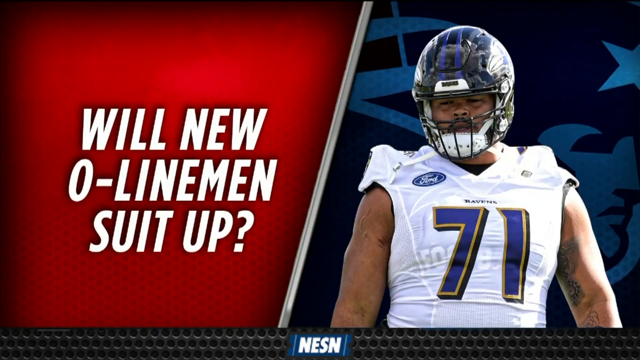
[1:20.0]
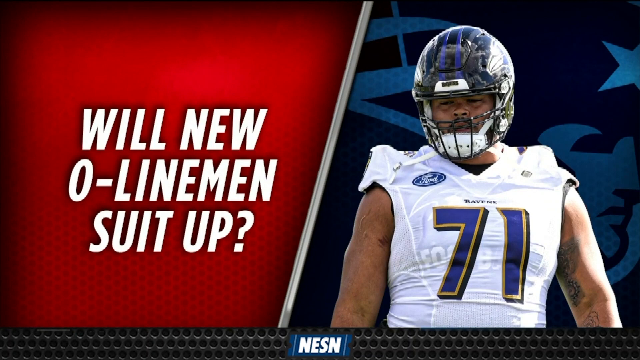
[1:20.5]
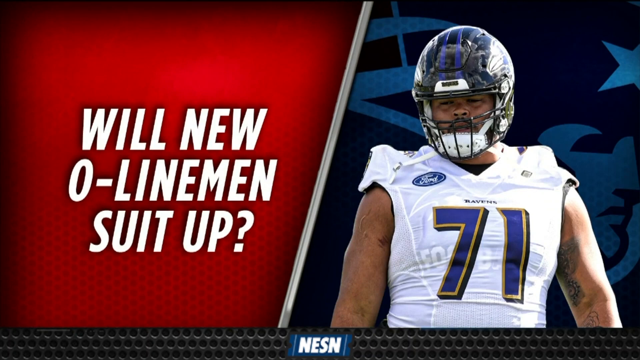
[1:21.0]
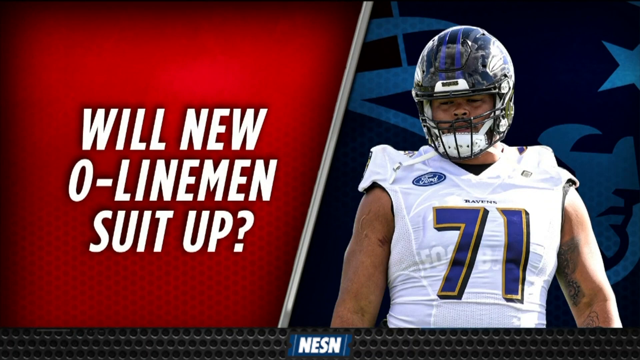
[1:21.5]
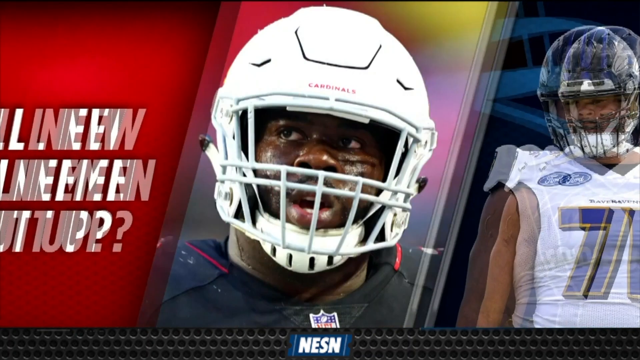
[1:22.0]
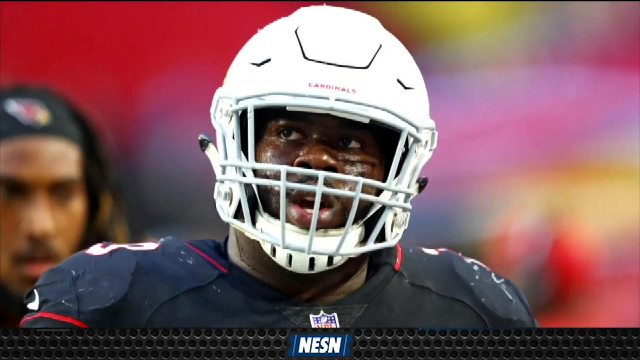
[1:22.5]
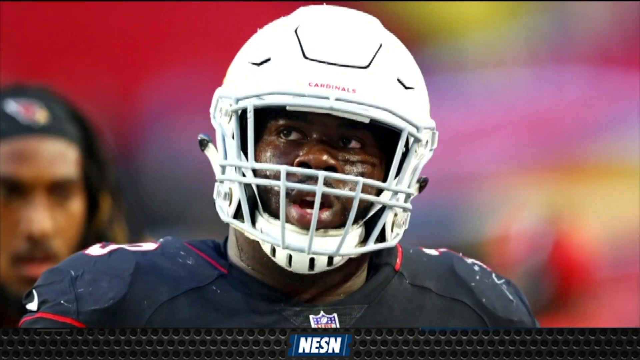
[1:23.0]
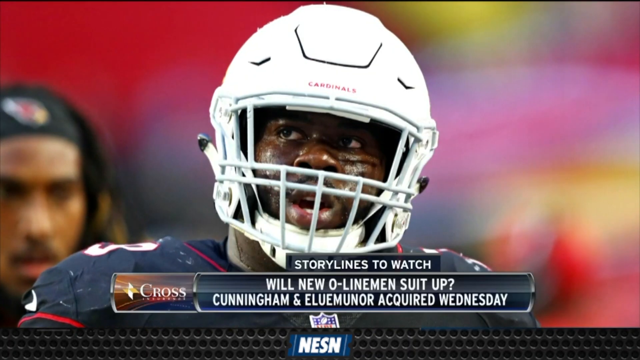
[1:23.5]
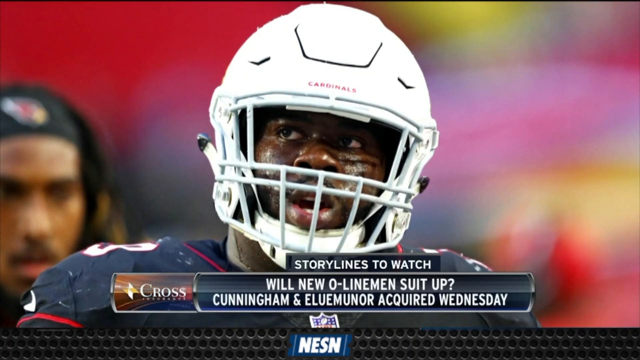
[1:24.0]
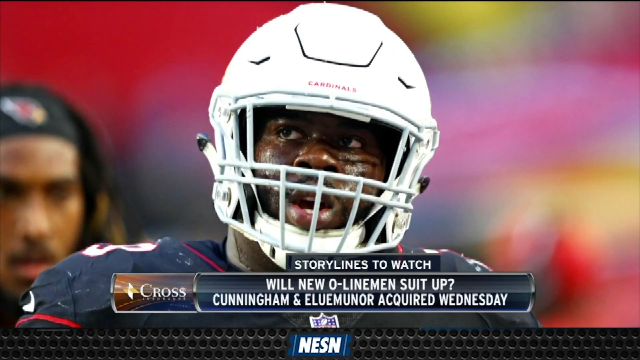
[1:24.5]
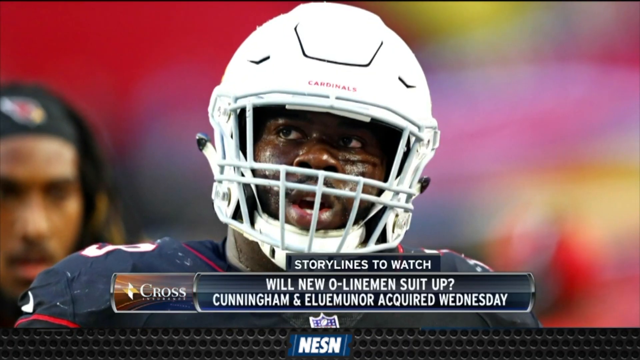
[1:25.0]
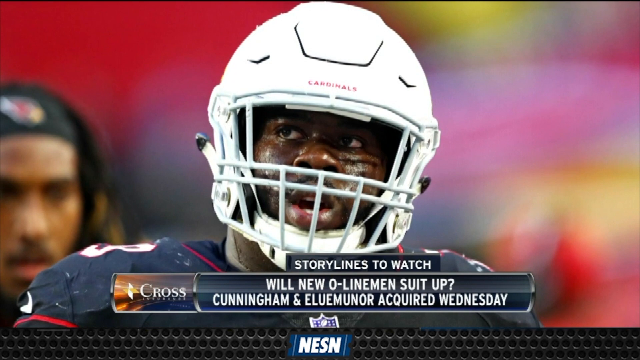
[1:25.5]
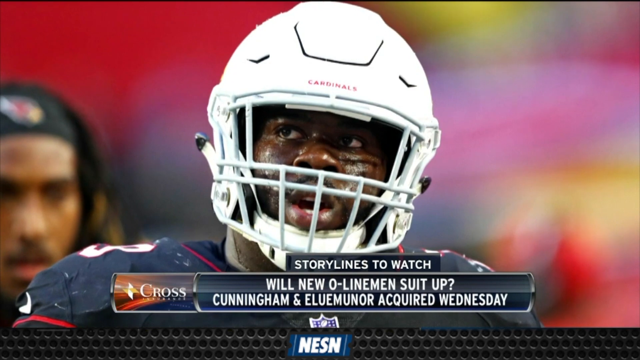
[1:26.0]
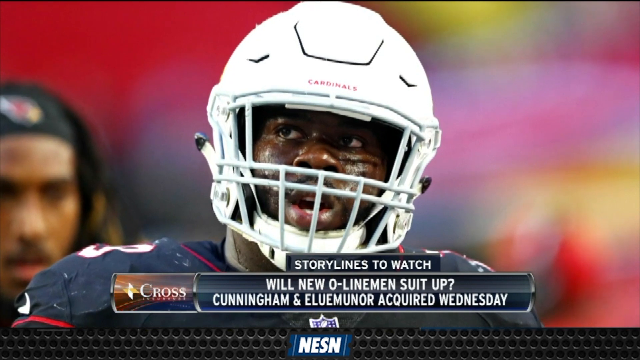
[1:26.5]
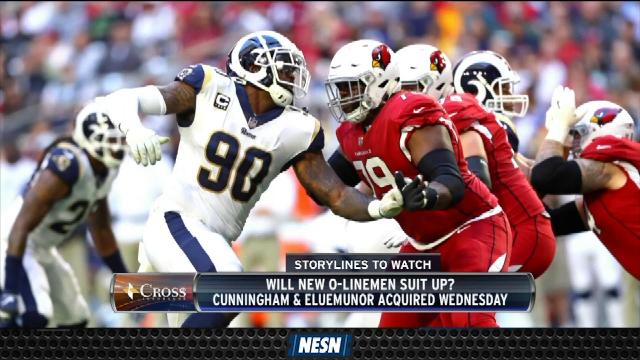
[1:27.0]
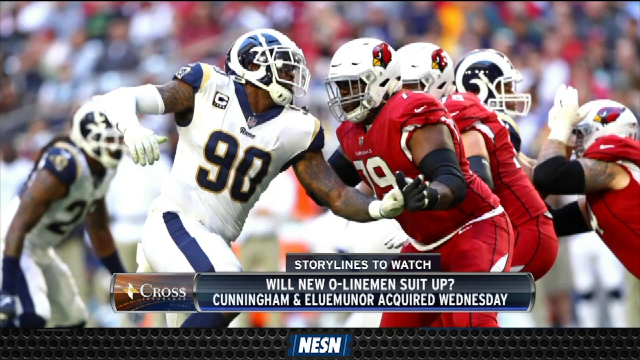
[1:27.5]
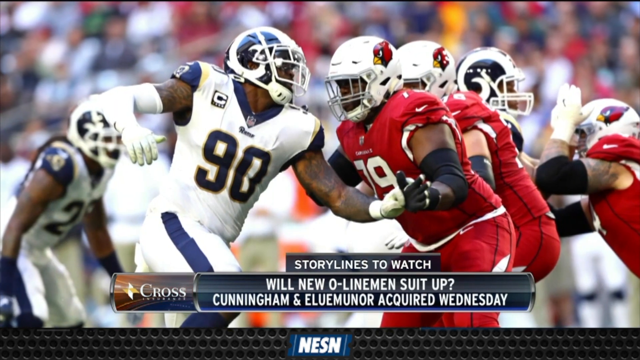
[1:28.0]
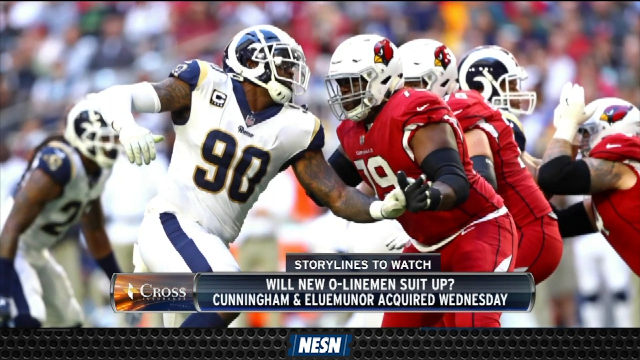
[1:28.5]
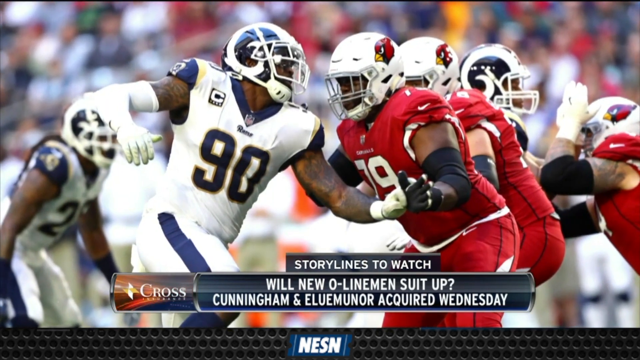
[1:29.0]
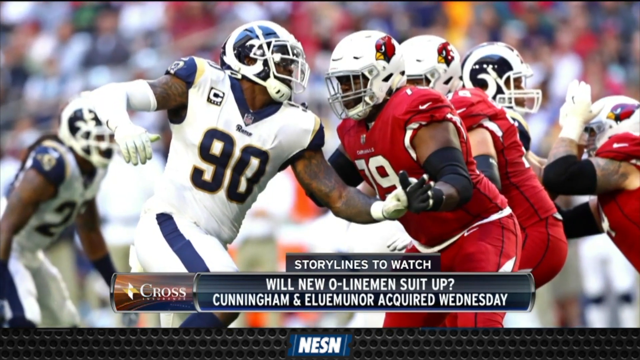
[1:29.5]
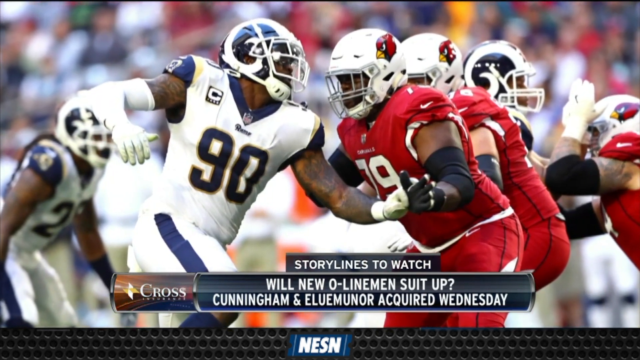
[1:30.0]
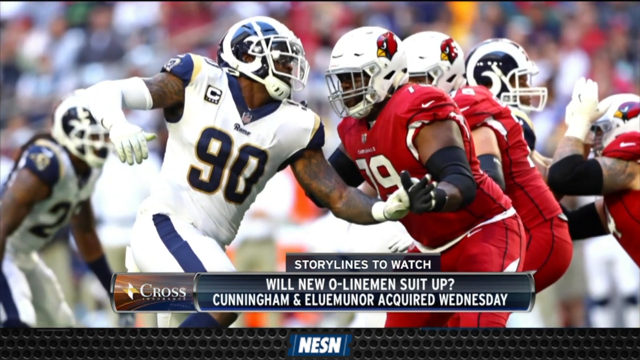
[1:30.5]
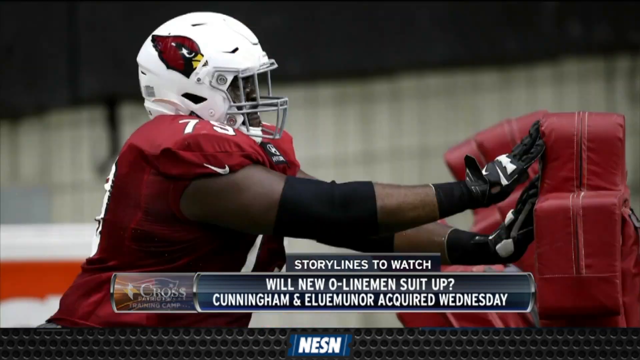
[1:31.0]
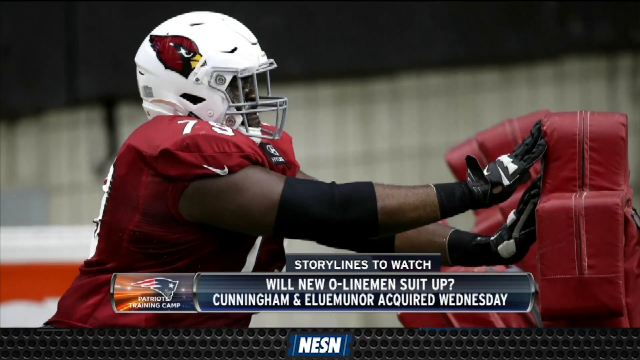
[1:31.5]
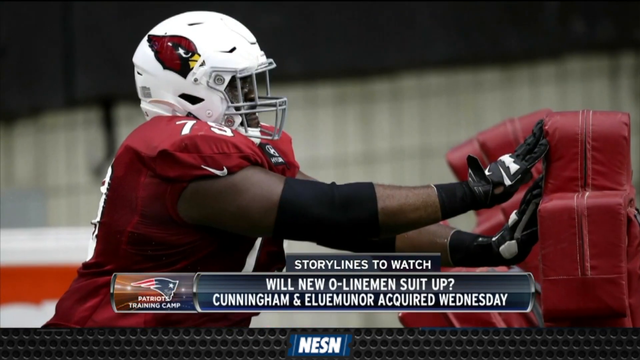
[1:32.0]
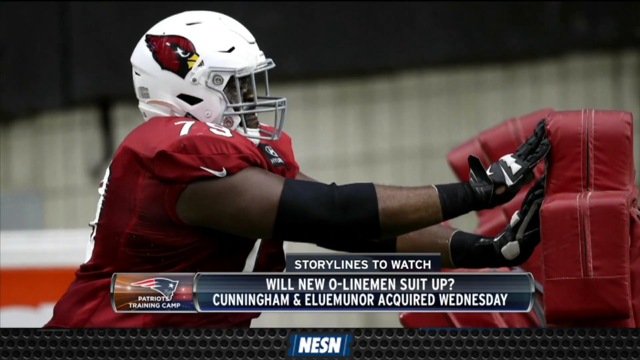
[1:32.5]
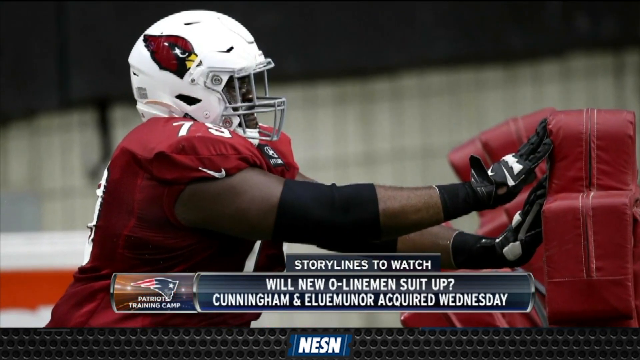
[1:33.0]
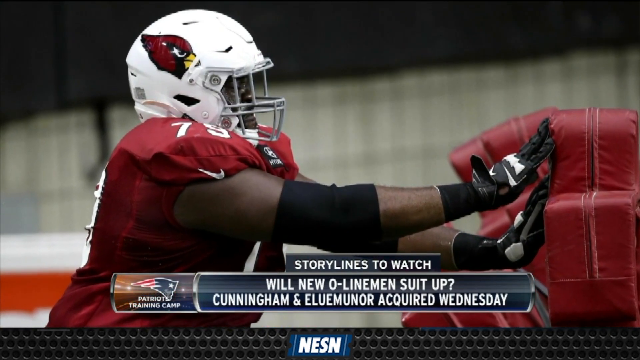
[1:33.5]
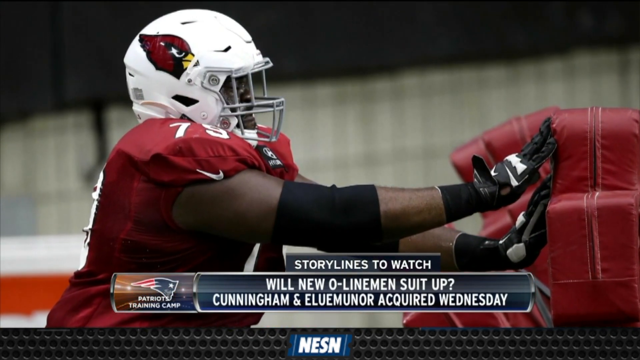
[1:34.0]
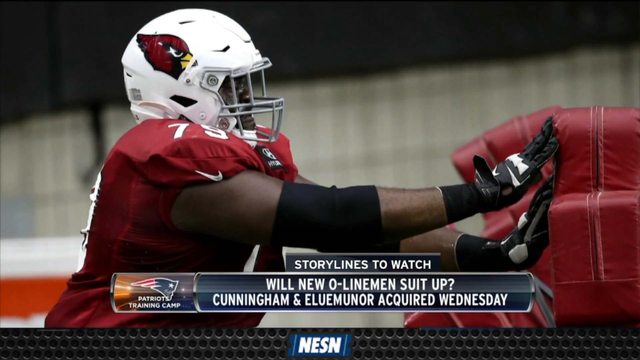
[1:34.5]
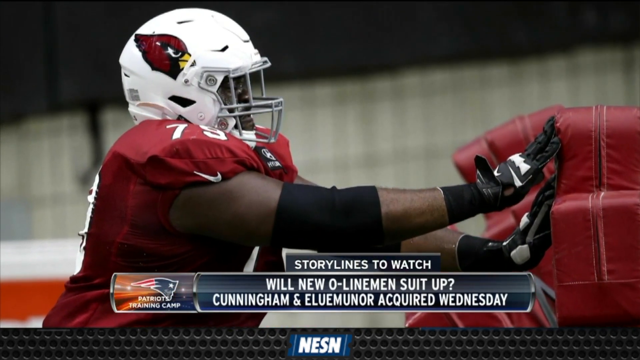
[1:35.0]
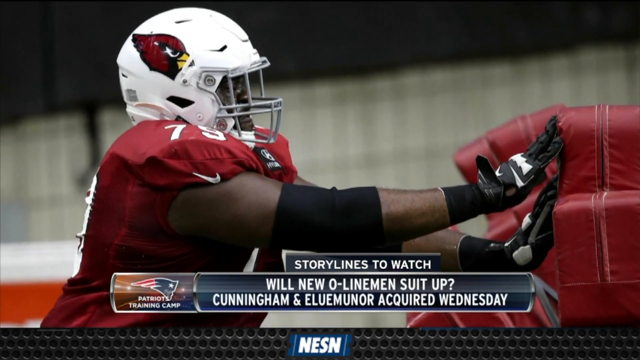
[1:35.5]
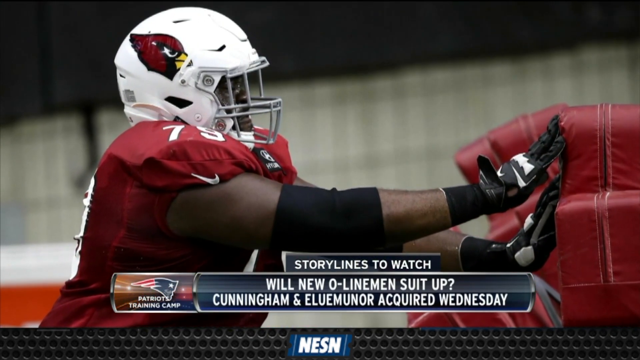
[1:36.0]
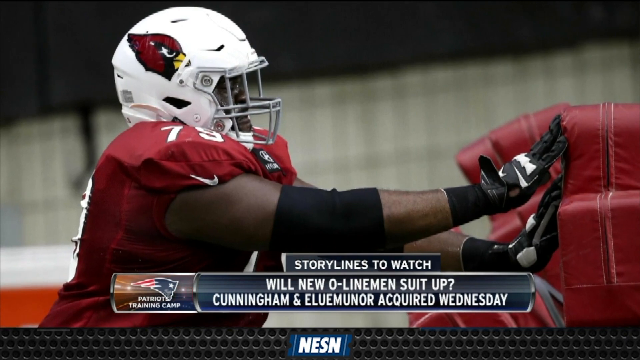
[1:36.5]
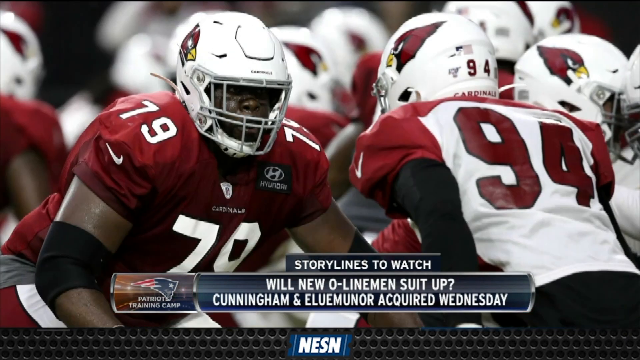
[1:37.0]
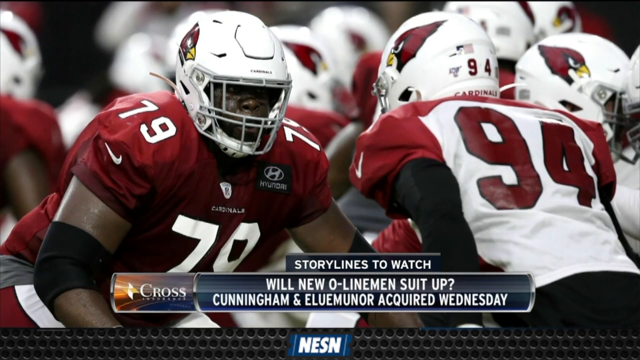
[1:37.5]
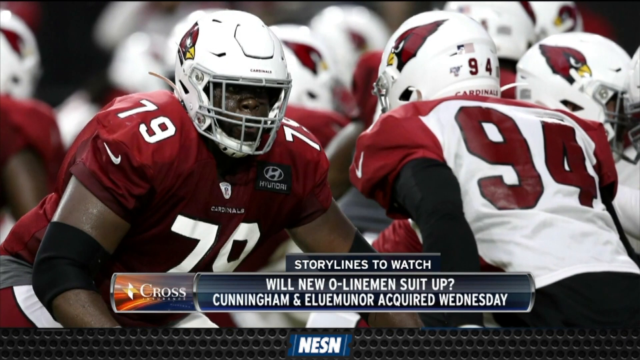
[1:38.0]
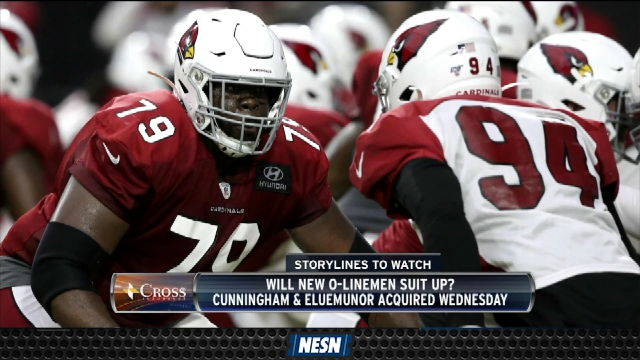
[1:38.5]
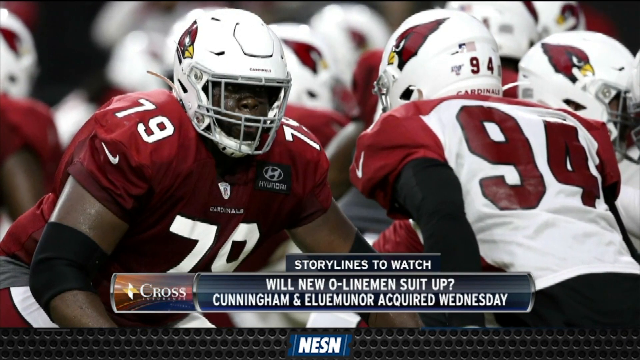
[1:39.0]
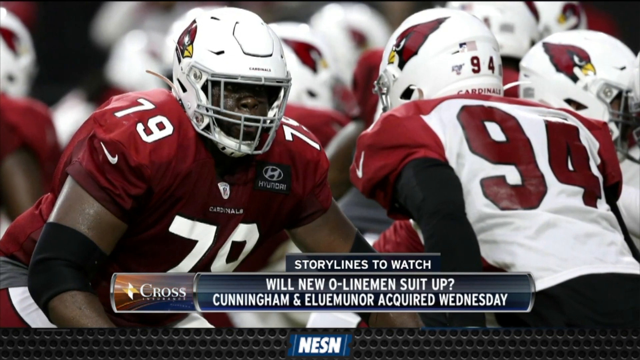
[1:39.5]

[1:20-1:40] A new poster, featuring a guy, appears on the TV. The video then changes to a bunch of guys running around the field. They are male, apparently around 30 to 40 or maybe 44, and wear jerseys and helmets. They look like they are about to start a game, getting into position and running around the field, already dressed to start a match. There are apparently around 15 of them, more or less, though this is uncertain.